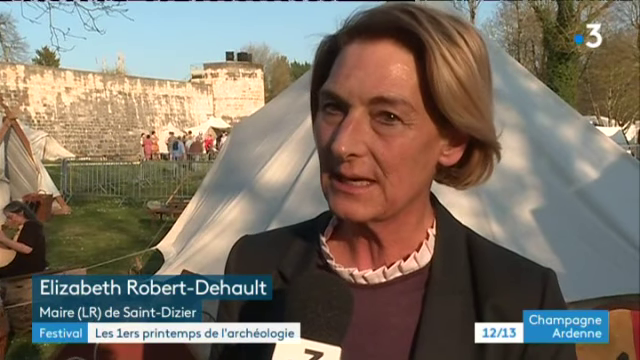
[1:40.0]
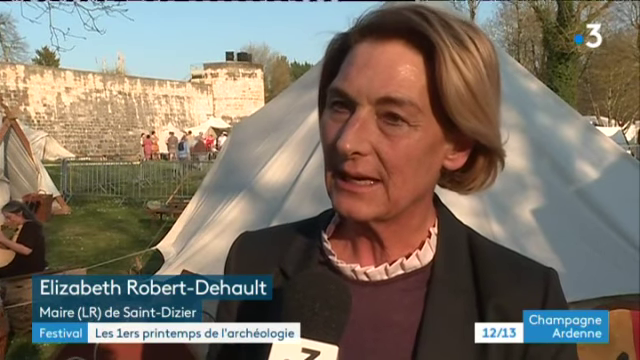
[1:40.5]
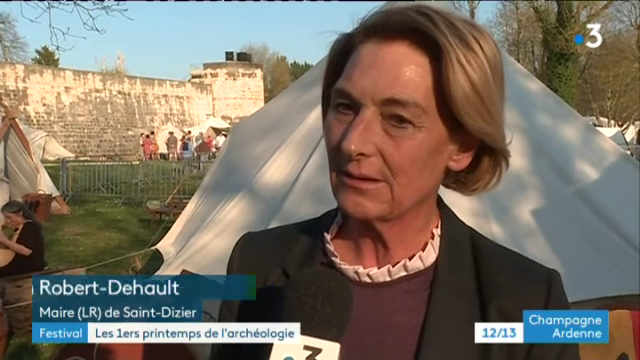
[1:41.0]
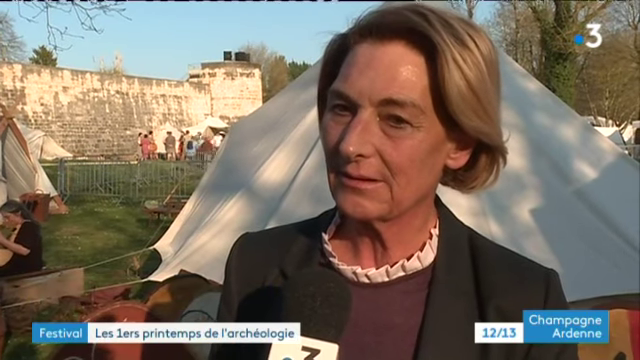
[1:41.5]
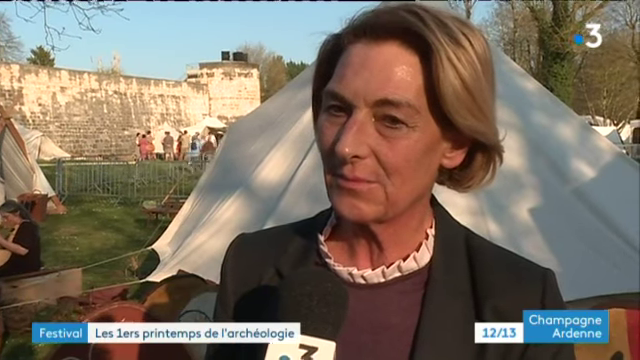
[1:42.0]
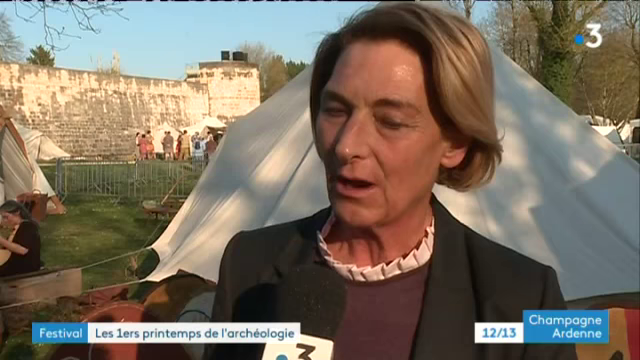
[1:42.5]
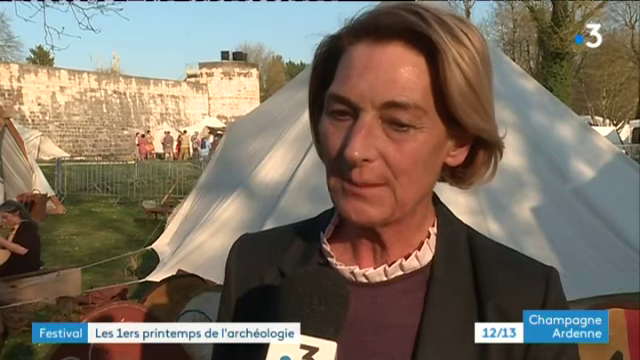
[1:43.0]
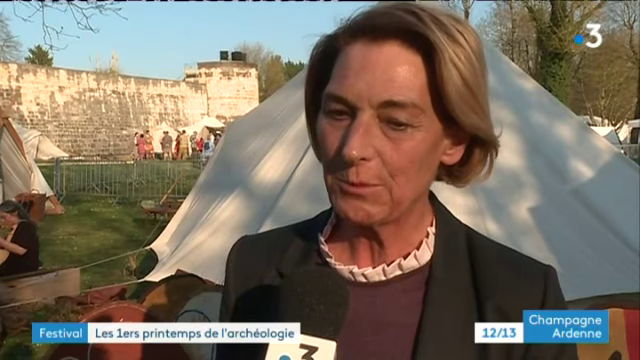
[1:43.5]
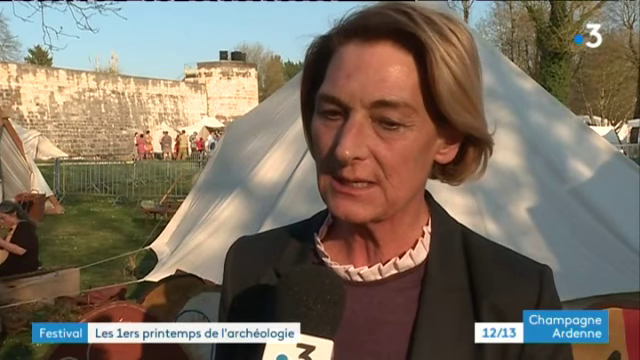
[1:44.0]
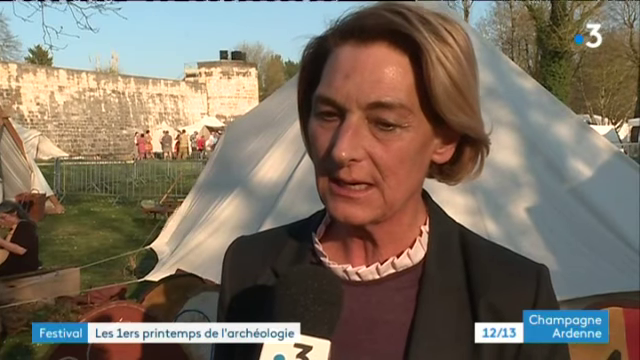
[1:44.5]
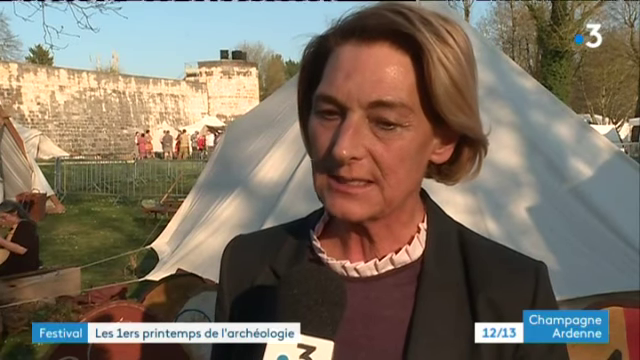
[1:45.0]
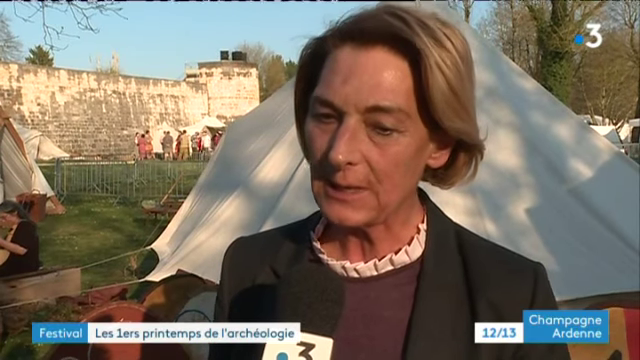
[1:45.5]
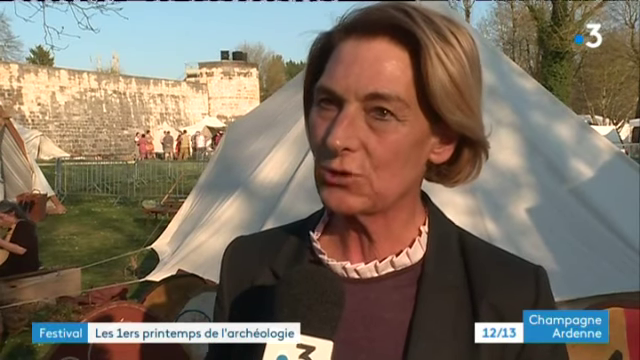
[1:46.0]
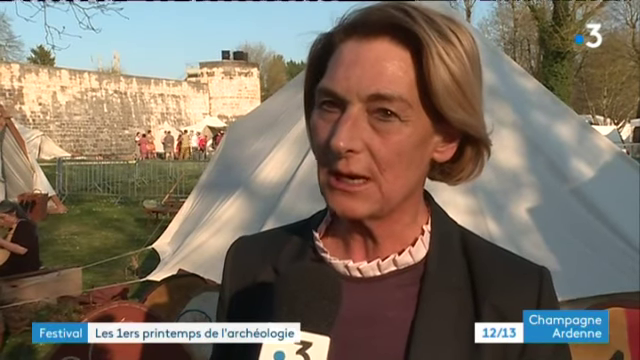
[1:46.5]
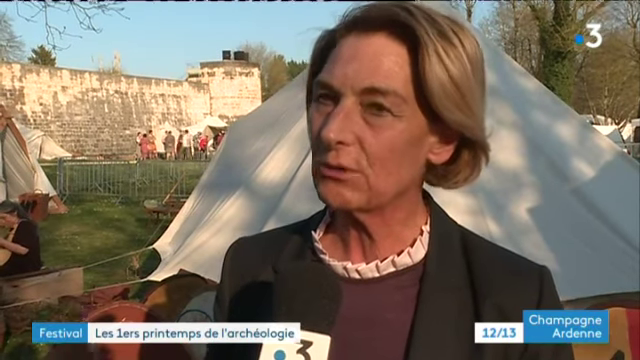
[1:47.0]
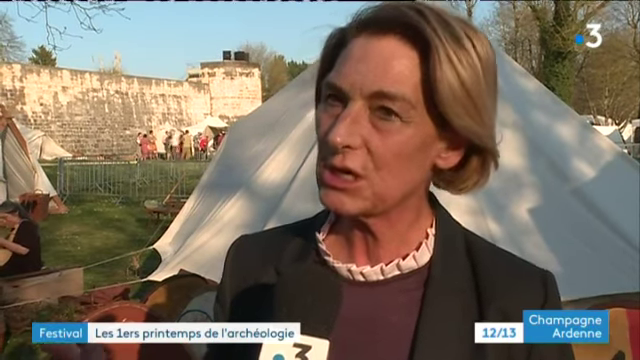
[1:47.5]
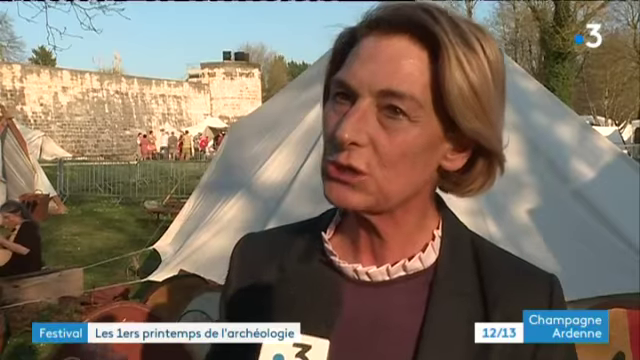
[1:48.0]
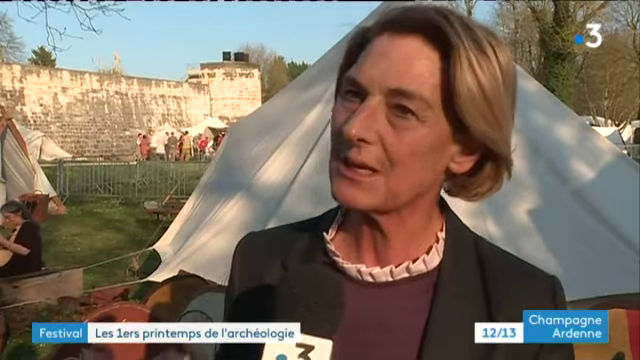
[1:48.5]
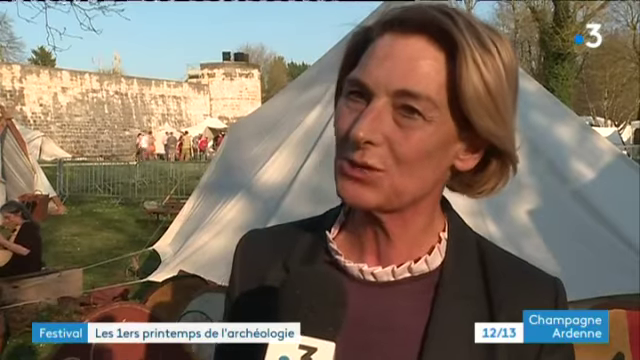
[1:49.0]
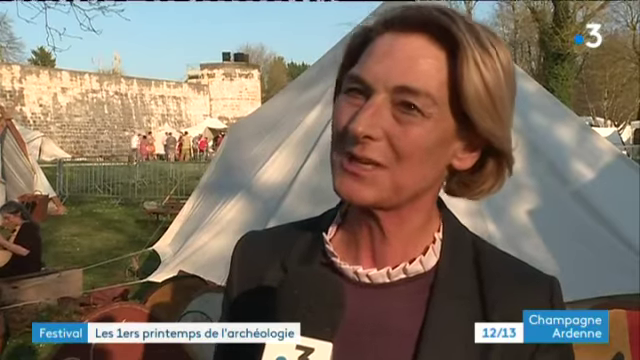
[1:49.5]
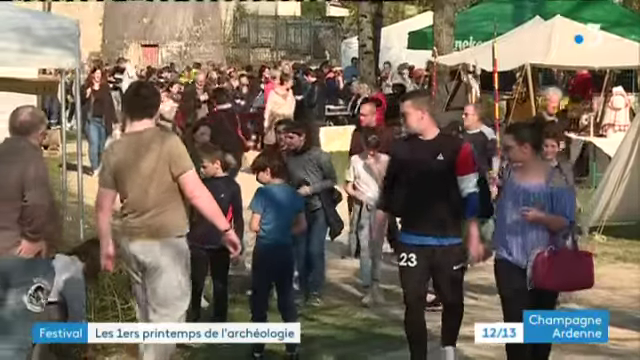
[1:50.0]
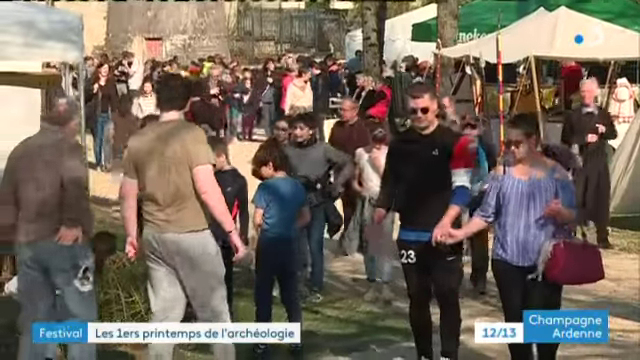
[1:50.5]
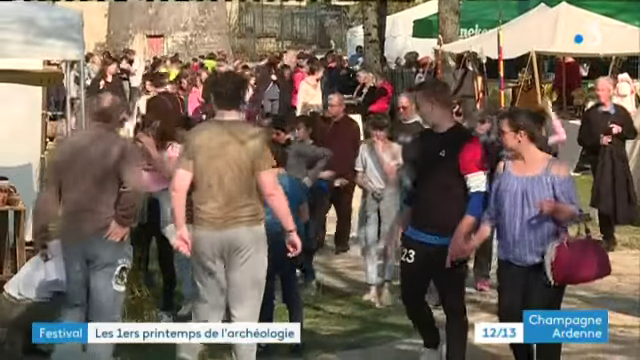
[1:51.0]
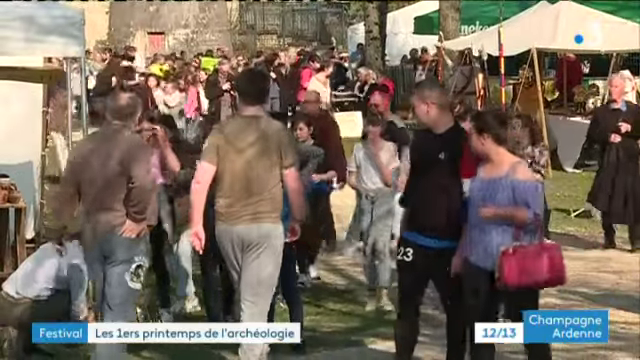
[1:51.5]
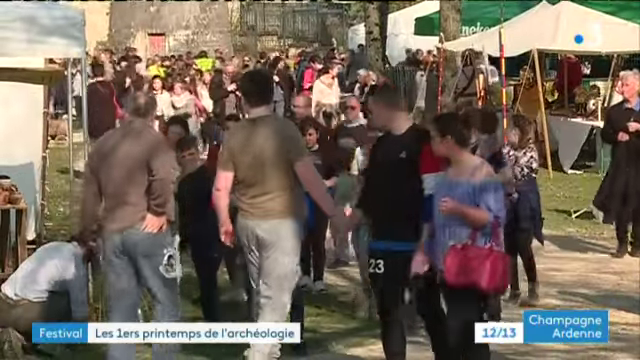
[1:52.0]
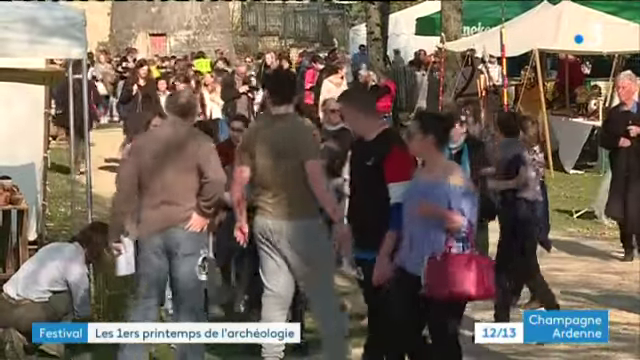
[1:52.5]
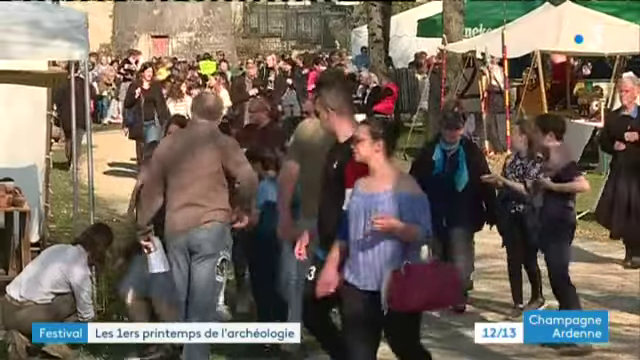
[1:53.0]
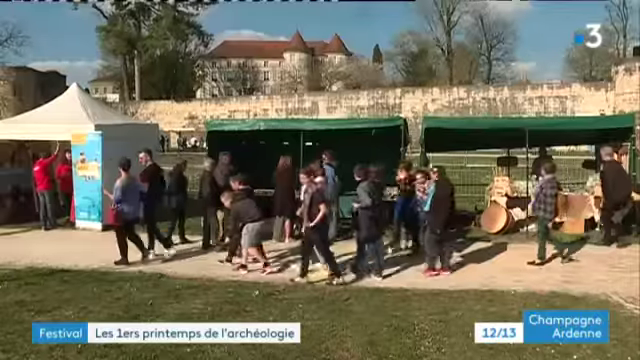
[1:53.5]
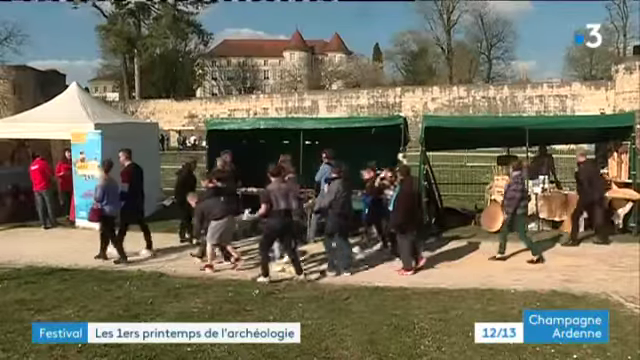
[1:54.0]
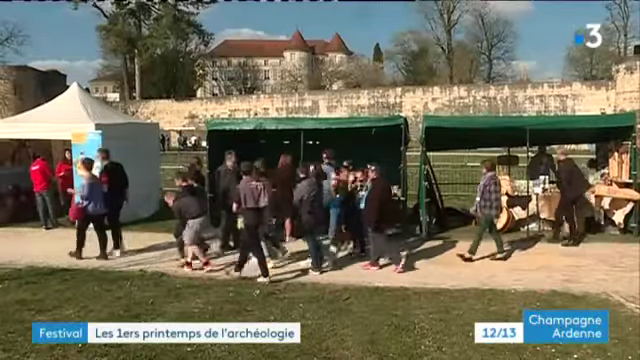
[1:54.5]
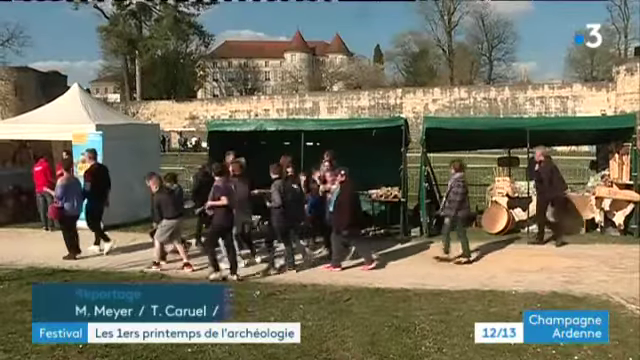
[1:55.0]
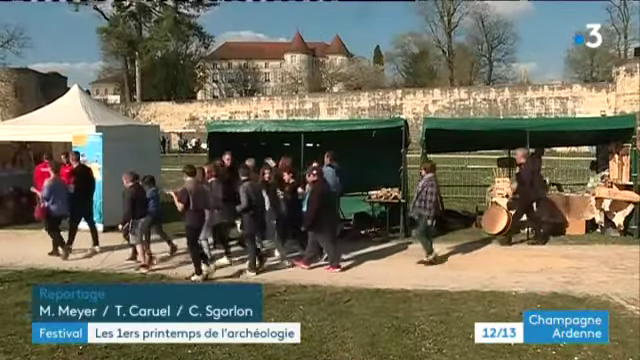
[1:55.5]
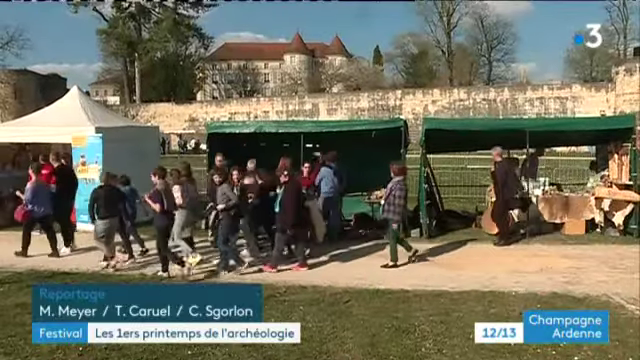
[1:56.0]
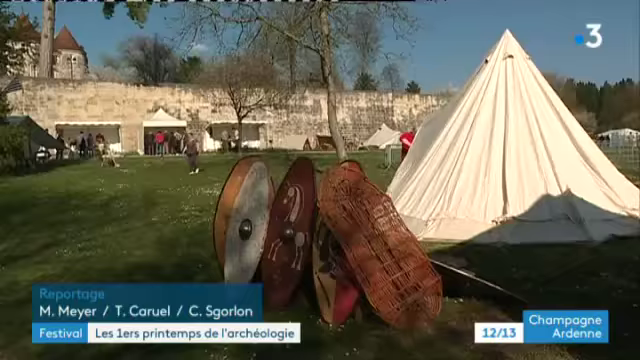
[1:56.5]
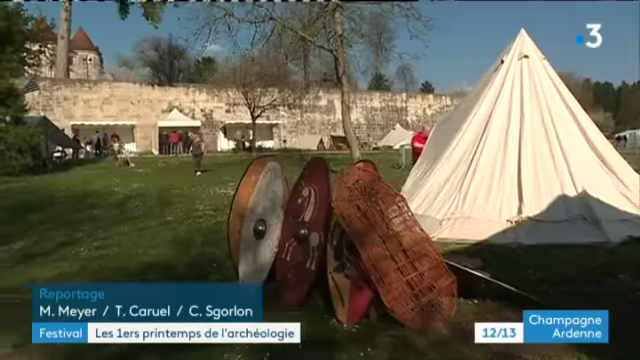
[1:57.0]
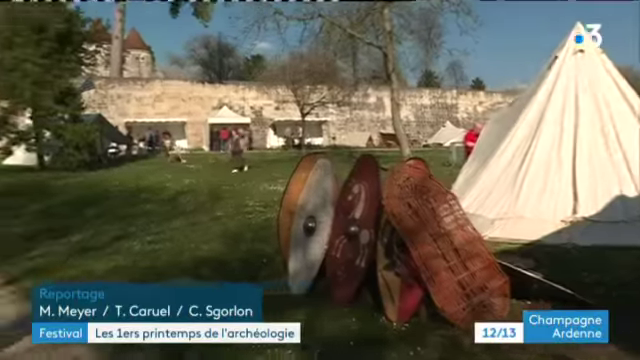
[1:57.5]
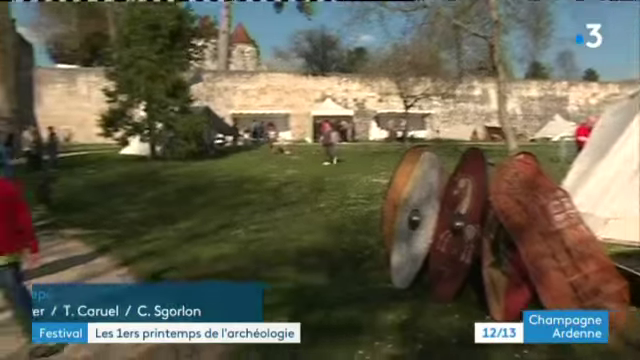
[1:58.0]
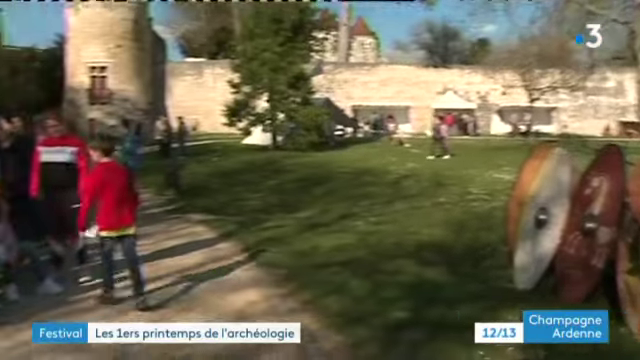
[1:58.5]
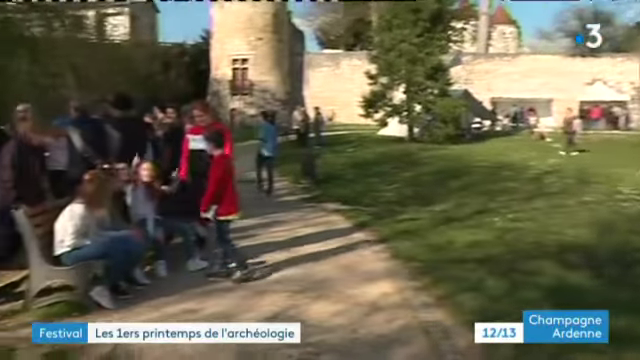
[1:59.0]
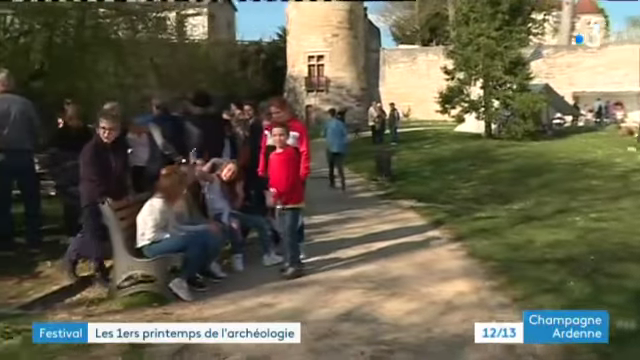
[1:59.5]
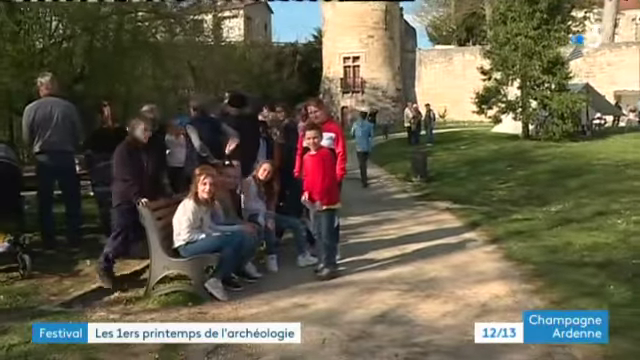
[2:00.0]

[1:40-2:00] The same woman stands in front of a white tent, with the wall of a medieval castle visible on the left of the screen and some tourists milling around in front of it. The blue box in the lower left corner says "Elizabeth Robert-Dehault", and a blue box in the lower right corner says "Champagne Ardennes". She talks to the camera for a while. Then crowds of men, women and children mill around the event, with marquees and tents on either side of a broad pathway and stone walls in the background. Another shot shows a medieval wall with a red-roofed castle behind it, two green marquees in the foreground and a white marquee on the left; the crowds walk from right to left as they look at the displays in the marquee, and a woman in the centre of the crowd waves at the camera. Next, a white tent is on the right of the screen, a medieval wall runs across the middle, green grass is in the foreground, and a jumble of medieval shields is in the centre of the image. The camera pans left to a small crowd, with several children seated on a park bench; one of them raises her arm to wave to the camera.